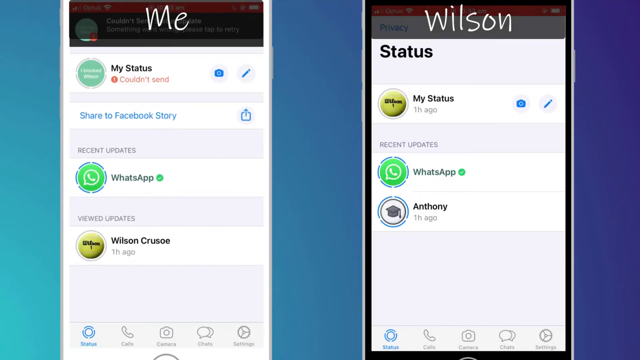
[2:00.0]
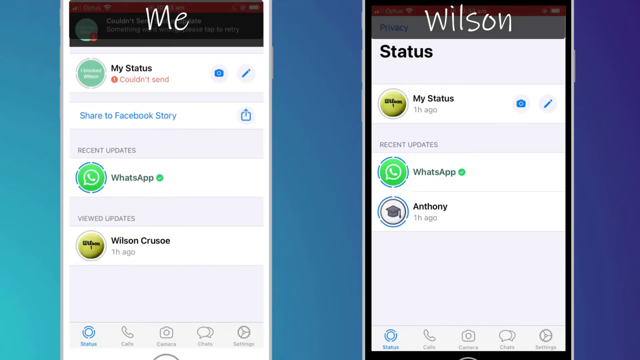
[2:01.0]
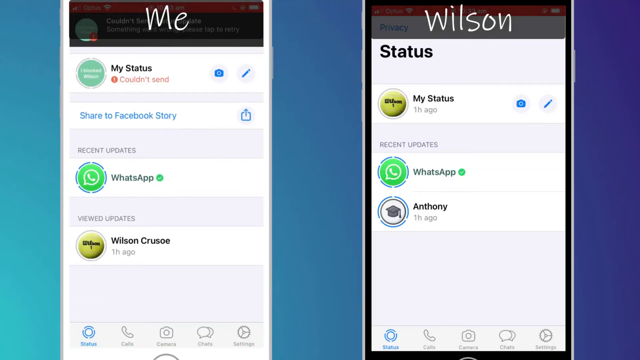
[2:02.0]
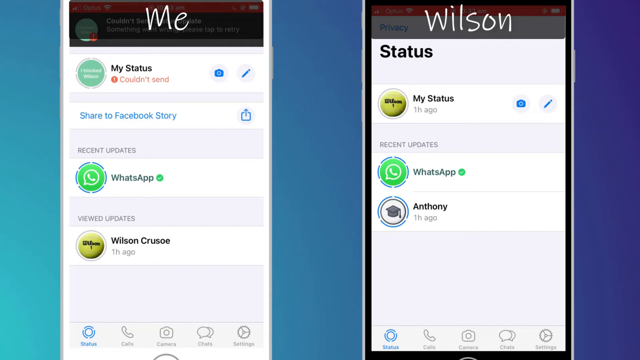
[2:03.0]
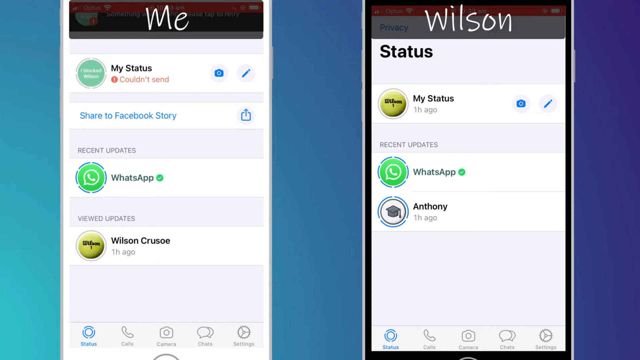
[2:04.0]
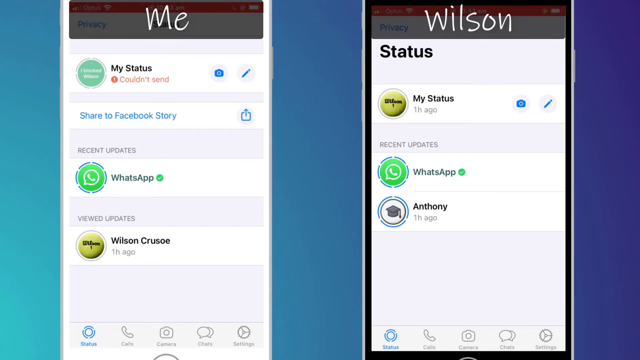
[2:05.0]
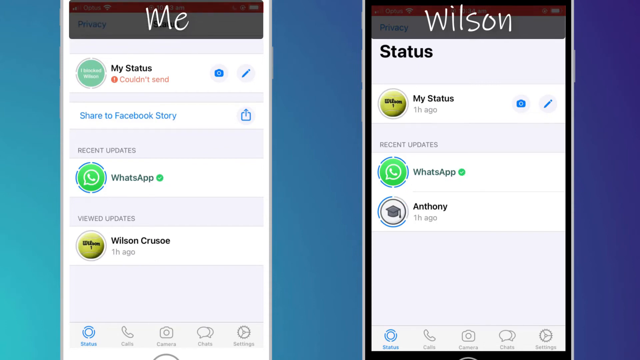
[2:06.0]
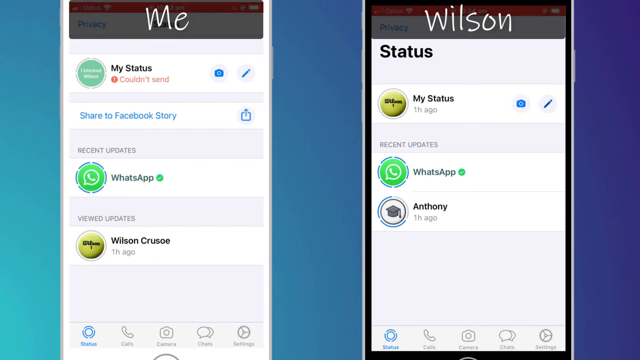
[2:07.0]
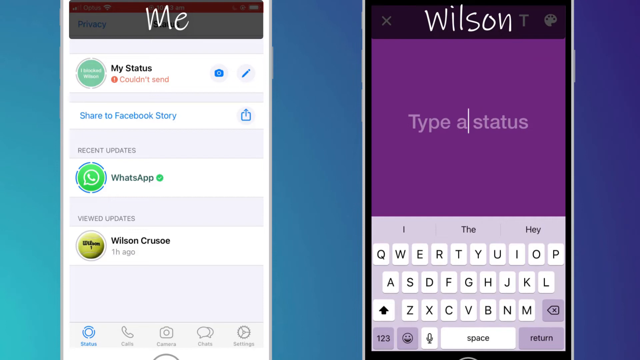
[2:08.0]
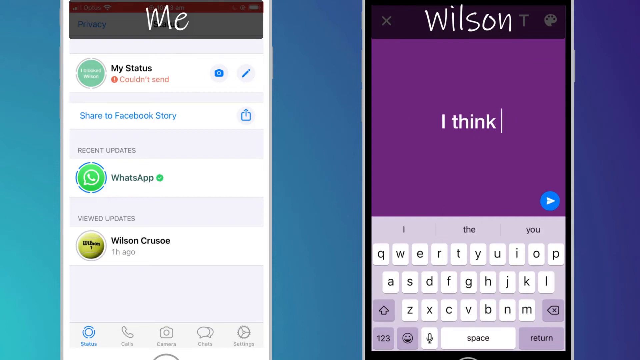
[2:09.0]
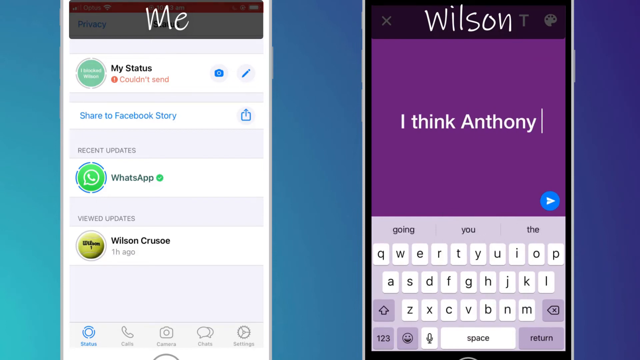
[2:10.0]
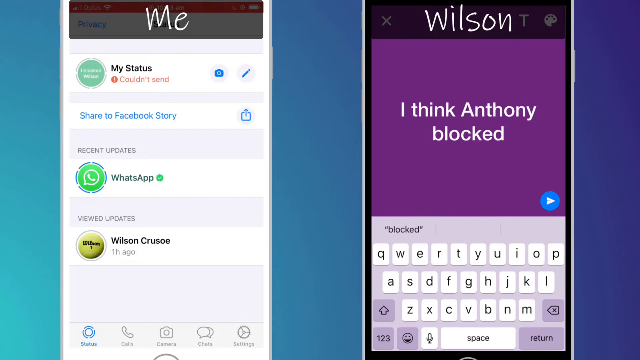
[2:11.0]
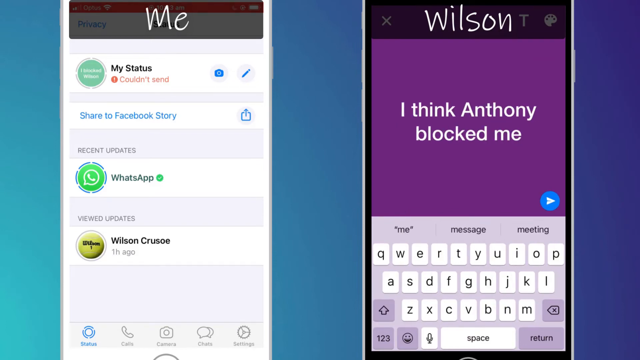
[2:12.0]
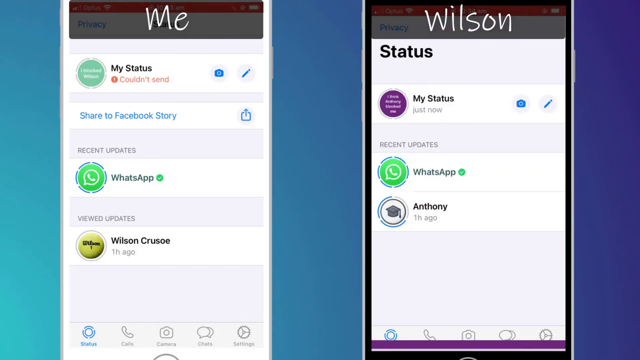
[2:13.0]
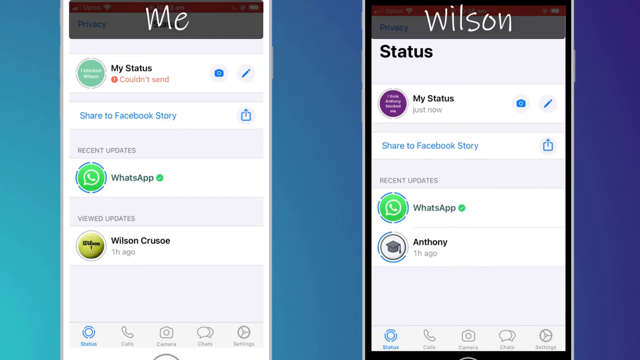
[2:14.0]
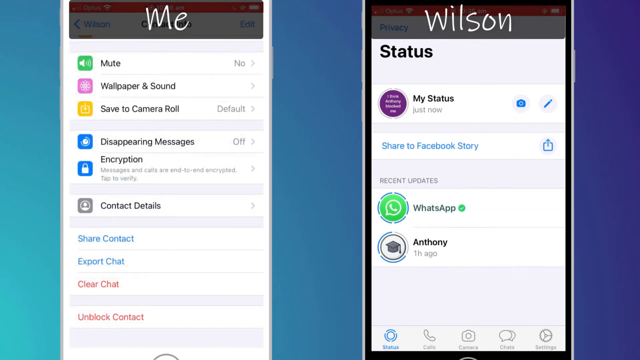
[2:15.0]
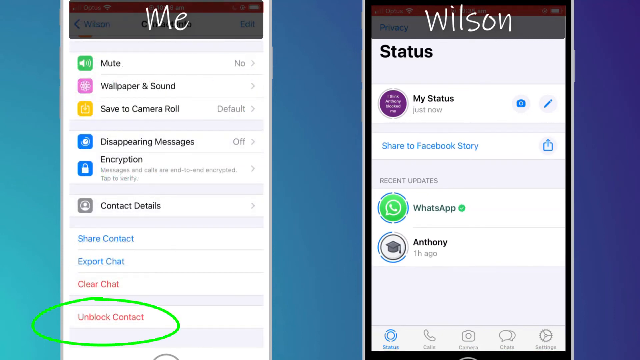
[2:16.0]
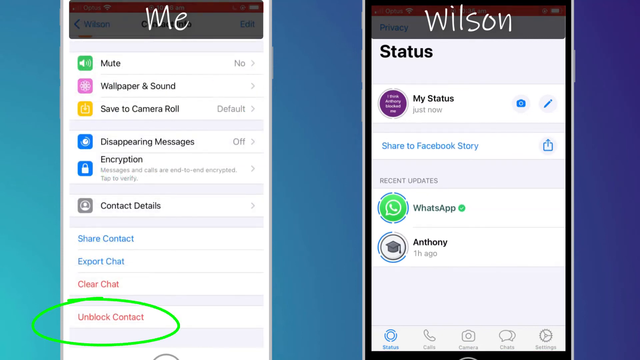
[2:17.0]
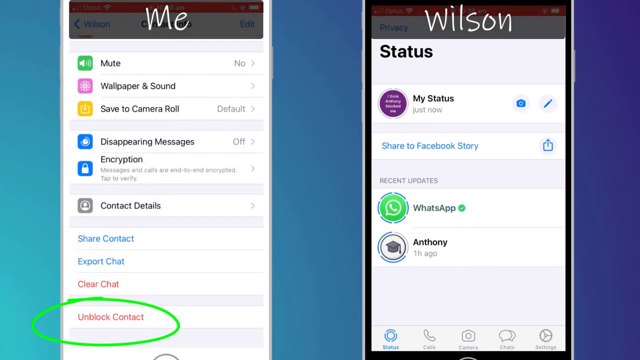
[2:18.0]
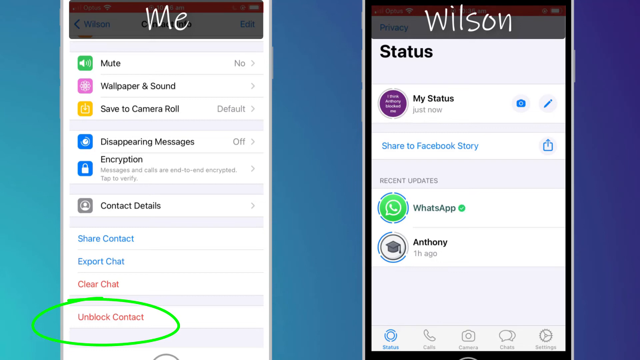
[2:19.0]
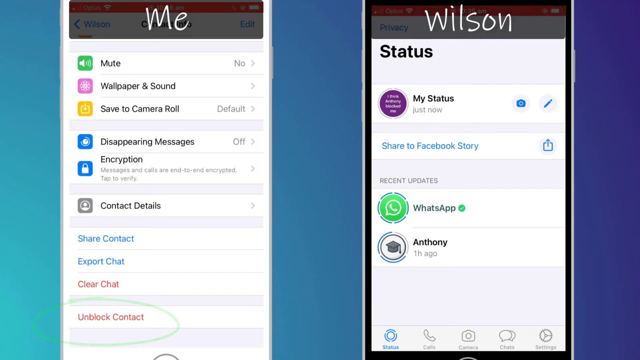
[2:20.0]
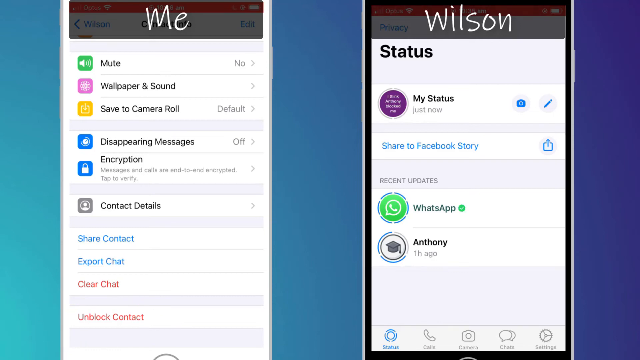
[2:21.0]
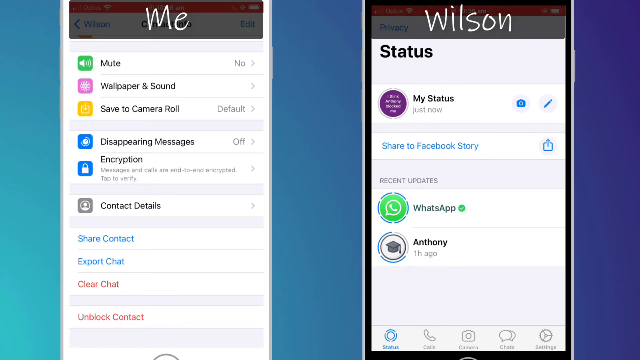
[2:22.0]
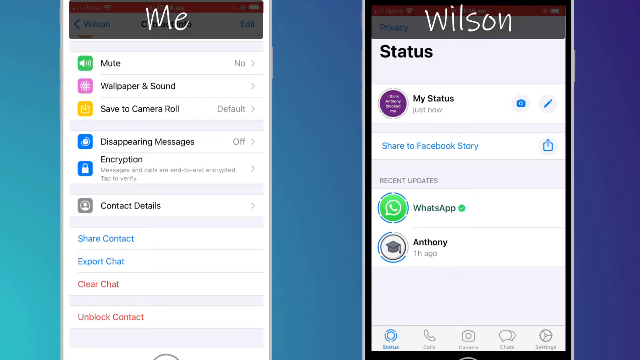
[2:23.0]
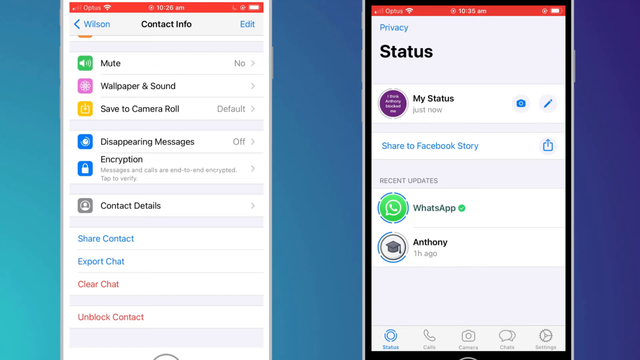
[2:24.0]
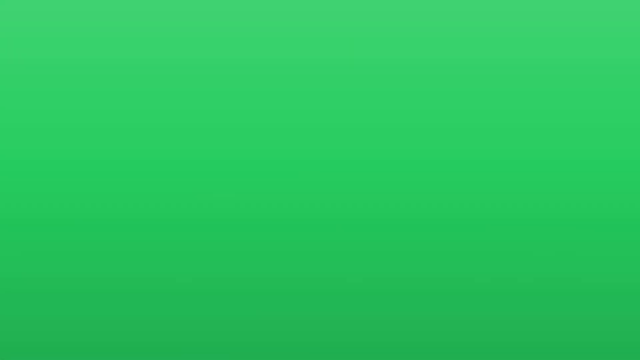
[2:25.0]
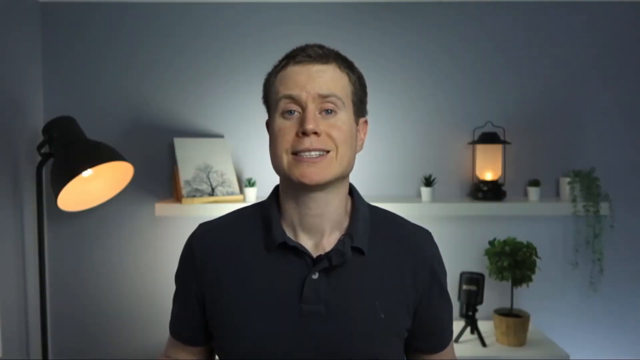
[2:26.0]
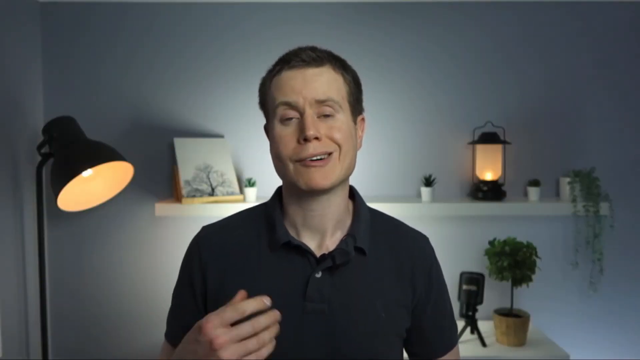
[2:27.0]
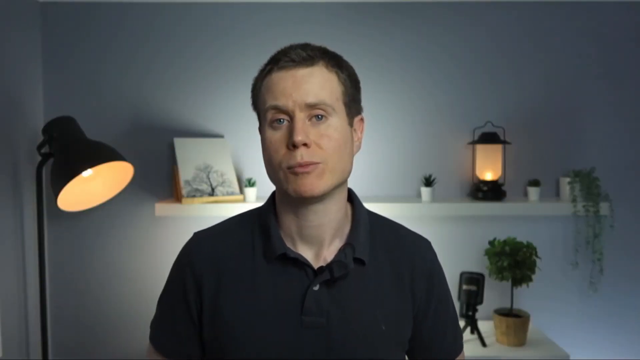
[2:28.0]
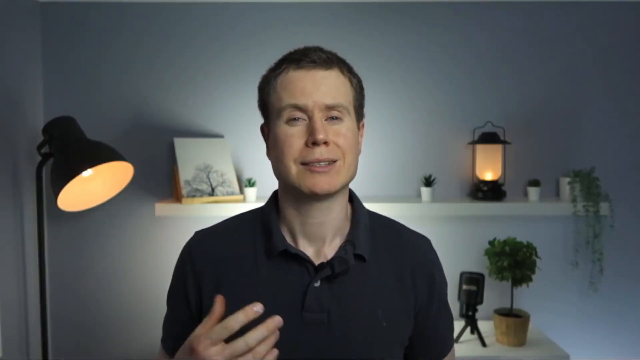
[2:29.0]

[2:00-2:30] Two phone screens are on a background that is light blue on the left, dark blue in the middle and almost purple on the right. White letters at the top of the left phone say "me", and at the top of the right phone "Wilson". The left phone shows "my status", then "share to Facebook stories", then "recent update" with a WhatsApp logo and "WhatsApp" to its right, then "viewed updates" with a logo, "Wilson Cruz" and "one hour ago" below it. The right phone shows "status", then "my status" with a logo and "one hour ago", then "recent updates" with the WhatsApp logo and "WhatsApp", and below that "Anthony" with a picture of a graduation cap with a tassel to the left and "one hour ago" below. The right phone screen turns purple and he types in white letters "I think Anthony blocked me." That goes down and the screen returns to everything it showed before. The left phone then goes to a page listing, from top to bottom, "mute", "wallpaper and sound", "disappearing messages", "encryption", "contact details", "share contact", "export chat", "clear chat" and "unblock contact". "Unblock contact" at the bottom is circled in green. A green page appears, then the video returns to the man in the black shirt in the room, who is talking with his right hand and fingertips coming up from the bottom of the screen.